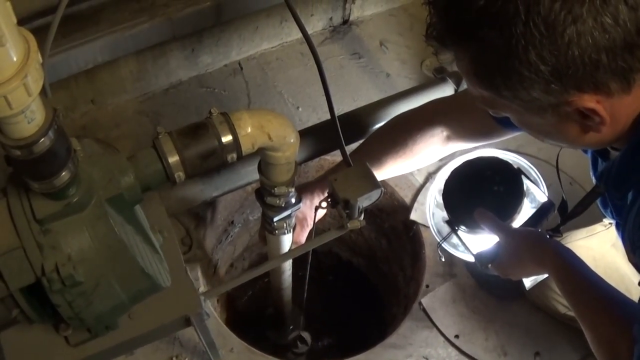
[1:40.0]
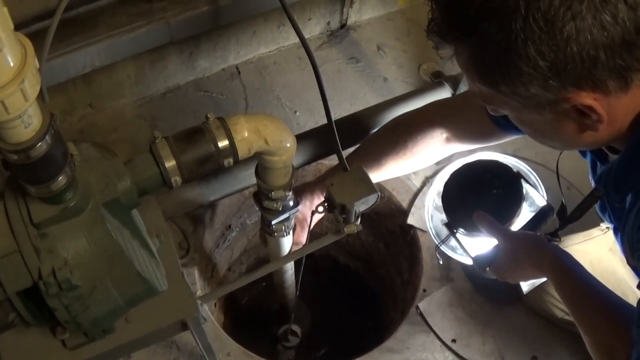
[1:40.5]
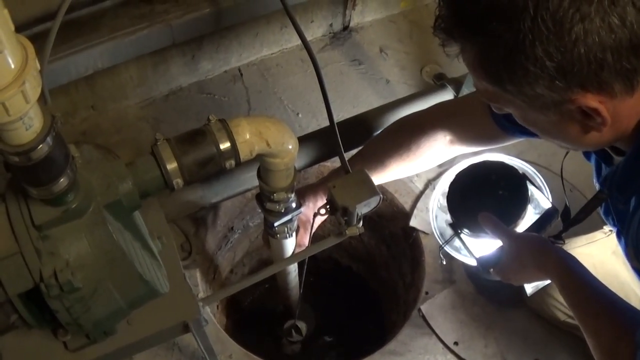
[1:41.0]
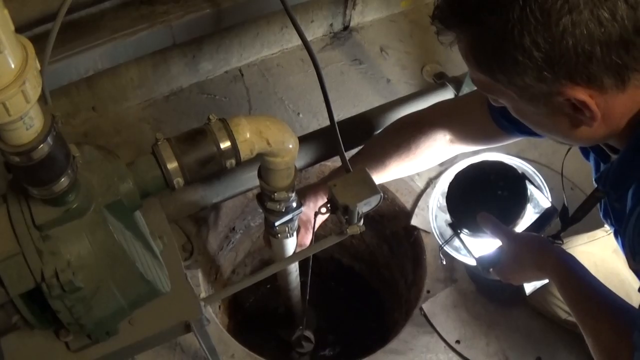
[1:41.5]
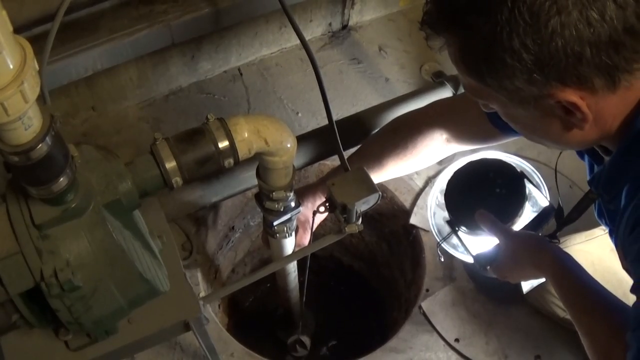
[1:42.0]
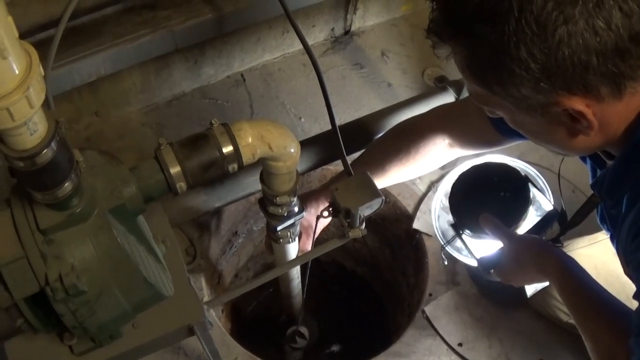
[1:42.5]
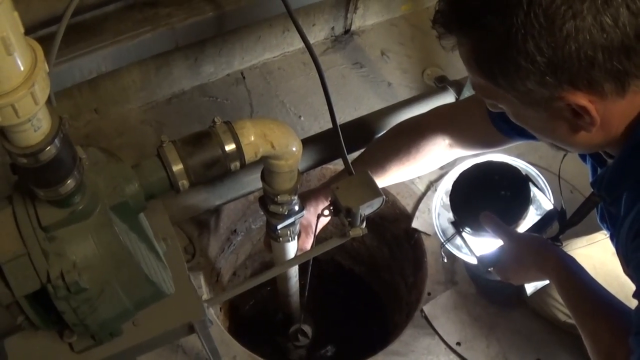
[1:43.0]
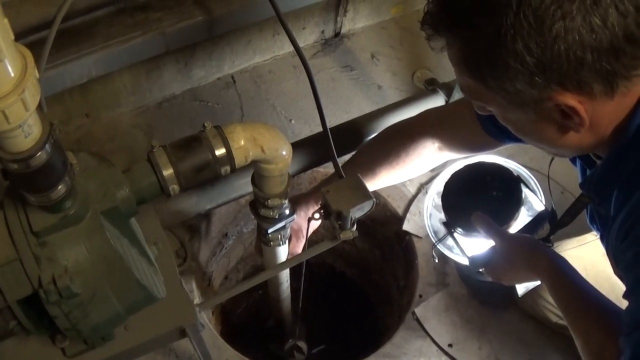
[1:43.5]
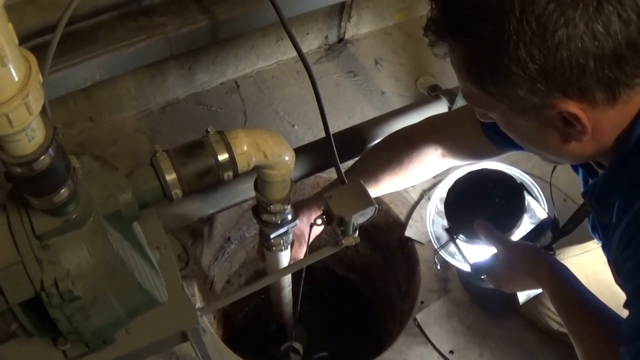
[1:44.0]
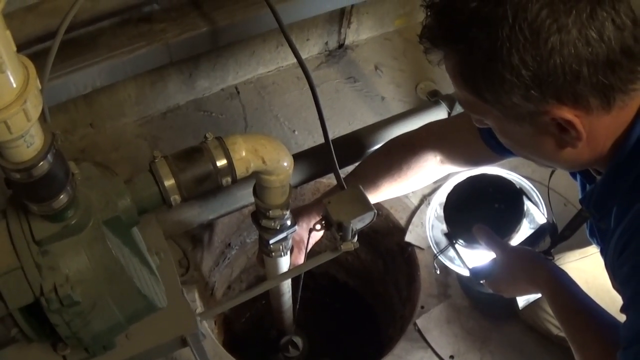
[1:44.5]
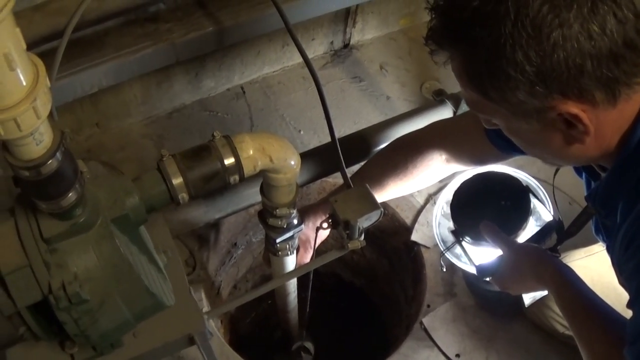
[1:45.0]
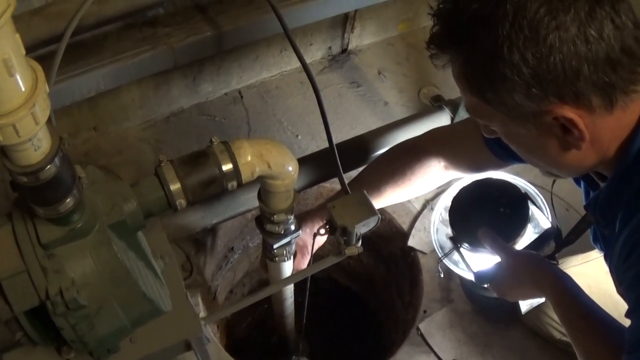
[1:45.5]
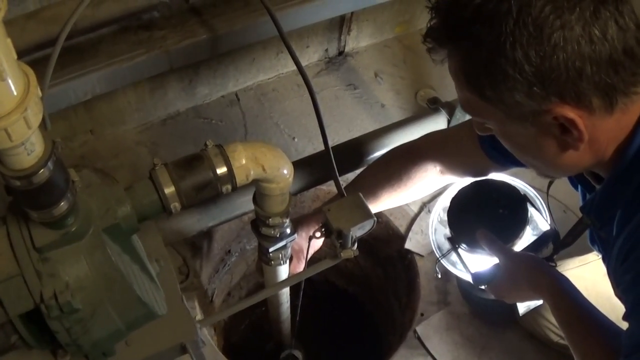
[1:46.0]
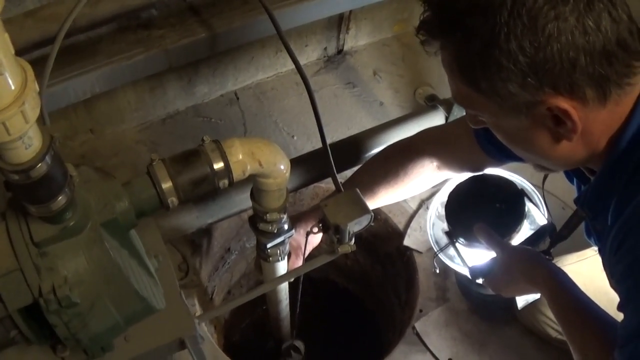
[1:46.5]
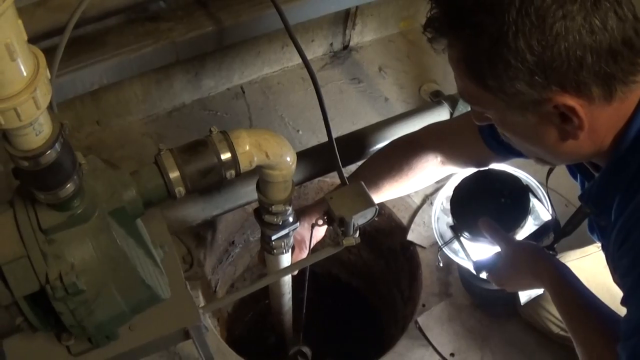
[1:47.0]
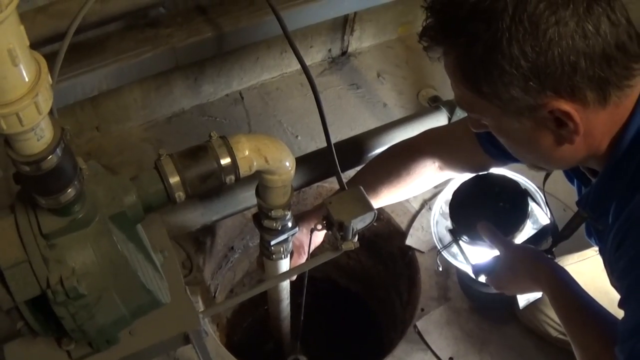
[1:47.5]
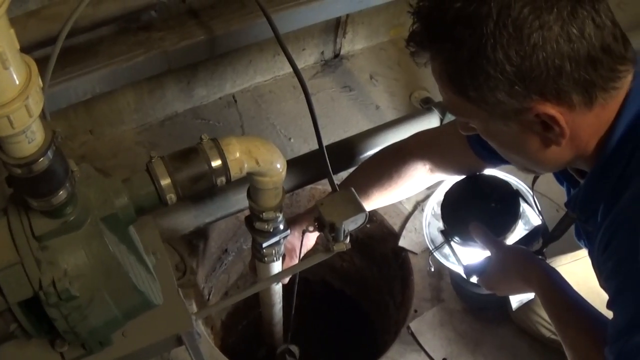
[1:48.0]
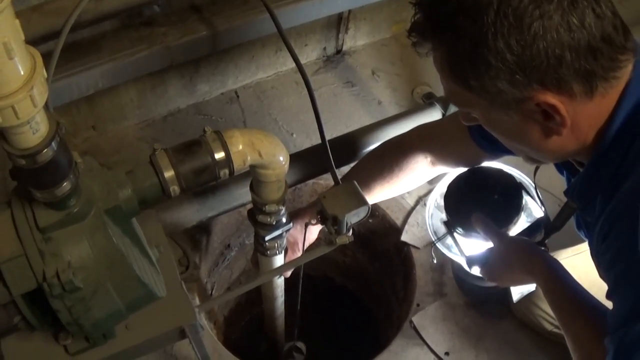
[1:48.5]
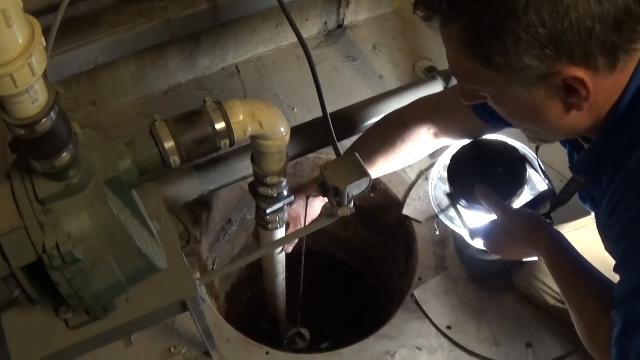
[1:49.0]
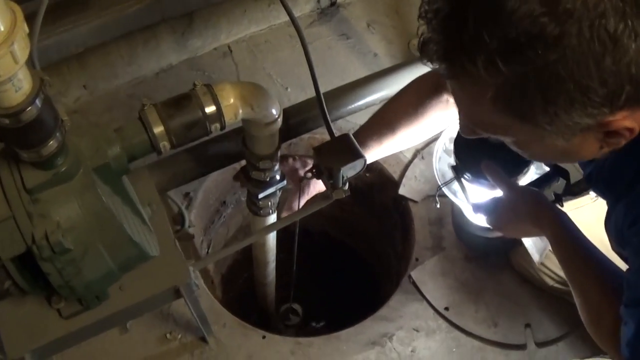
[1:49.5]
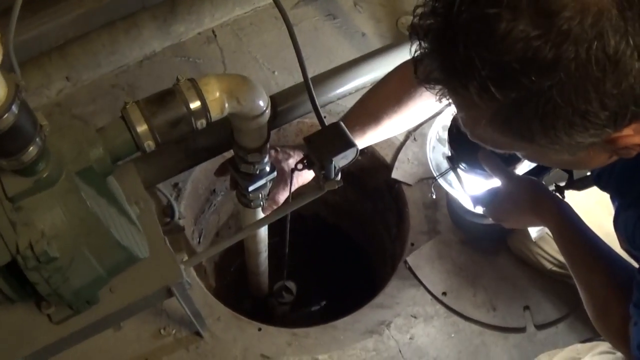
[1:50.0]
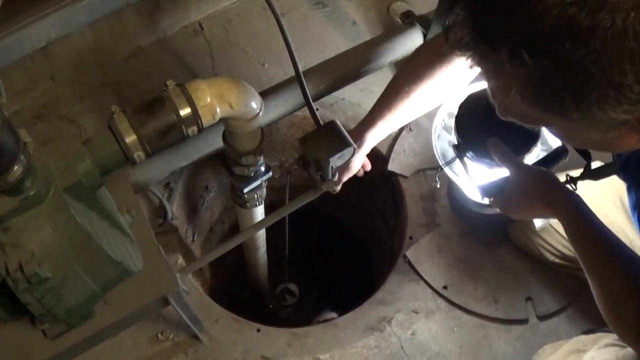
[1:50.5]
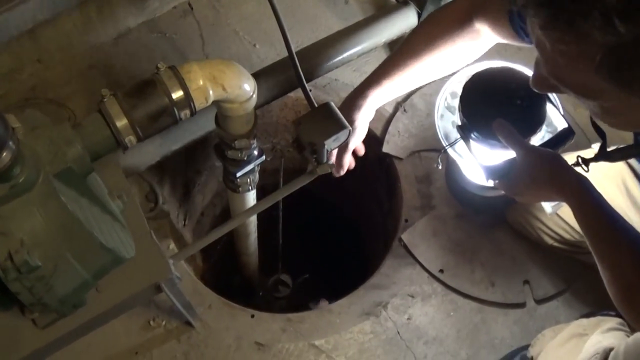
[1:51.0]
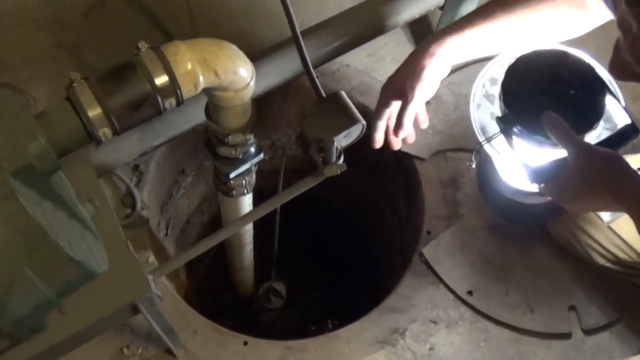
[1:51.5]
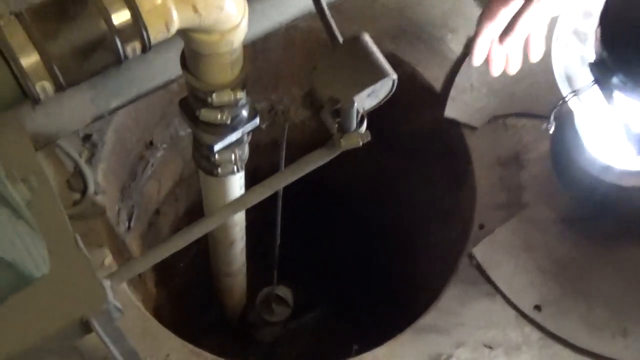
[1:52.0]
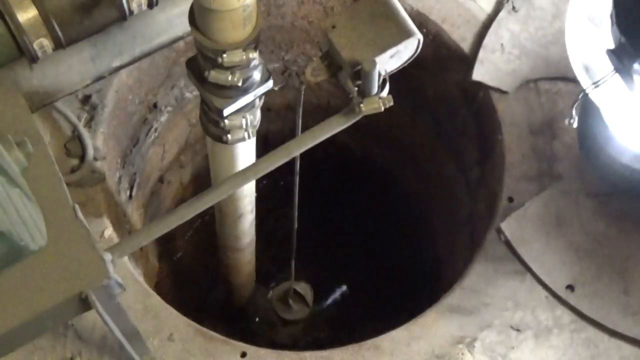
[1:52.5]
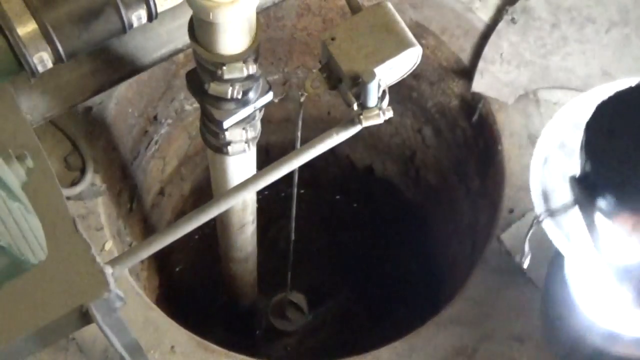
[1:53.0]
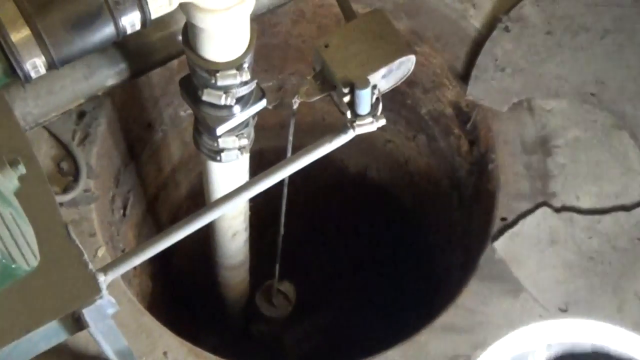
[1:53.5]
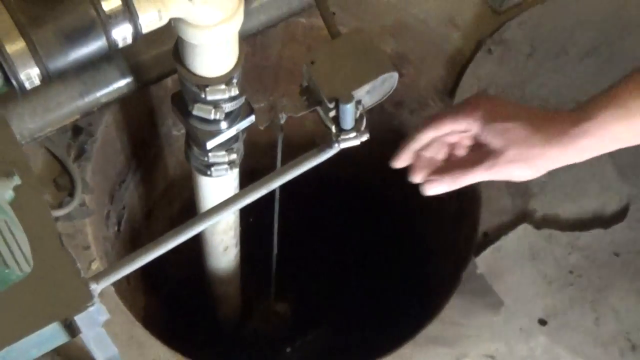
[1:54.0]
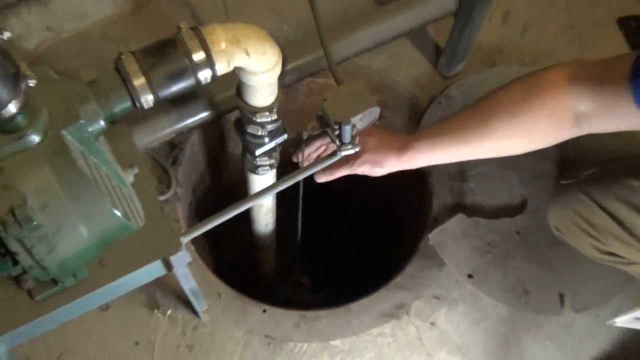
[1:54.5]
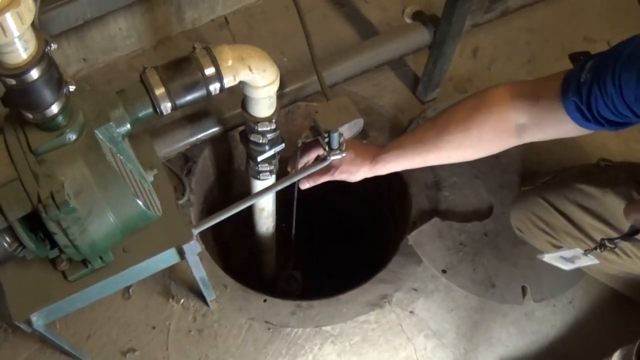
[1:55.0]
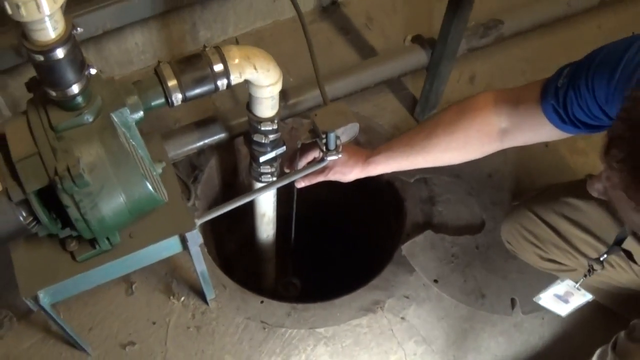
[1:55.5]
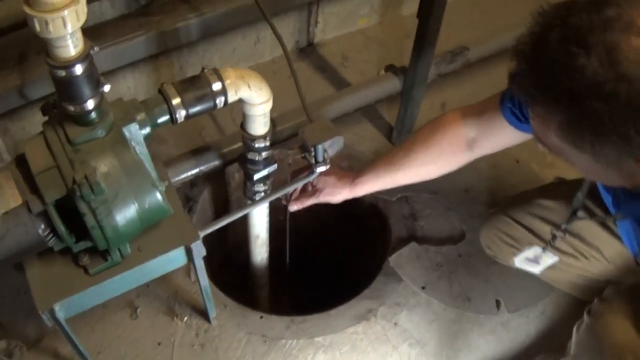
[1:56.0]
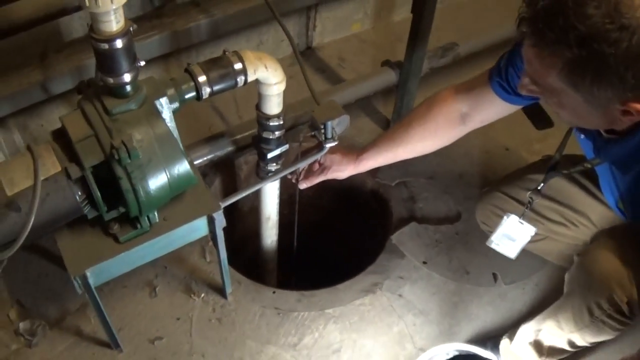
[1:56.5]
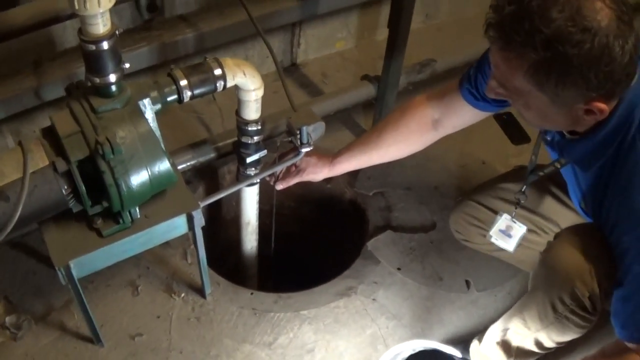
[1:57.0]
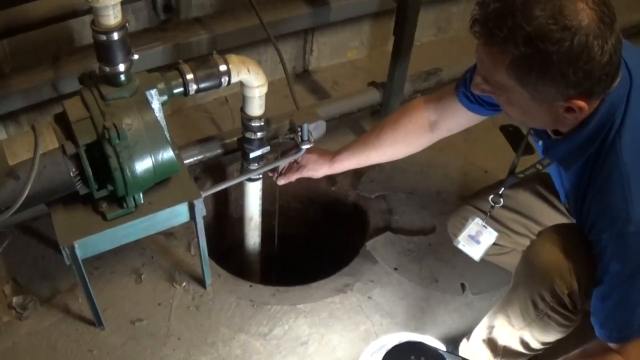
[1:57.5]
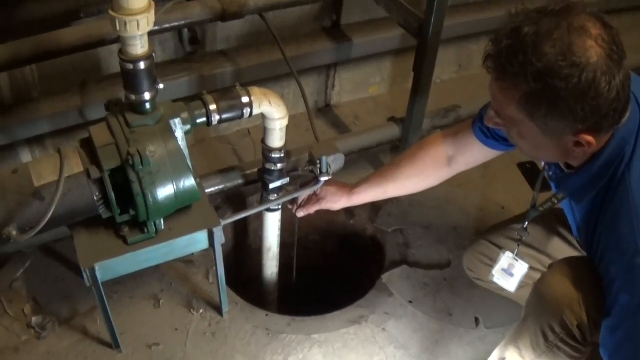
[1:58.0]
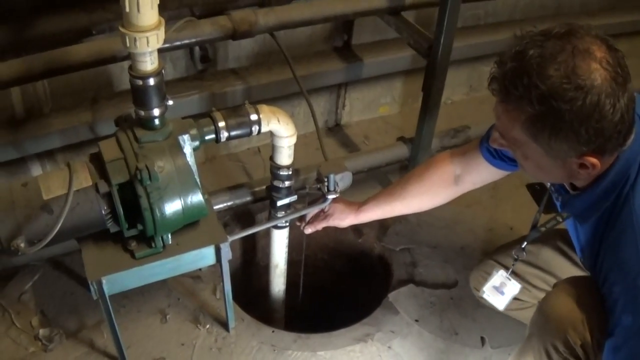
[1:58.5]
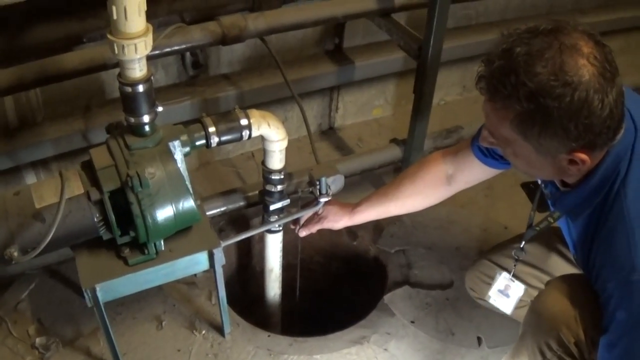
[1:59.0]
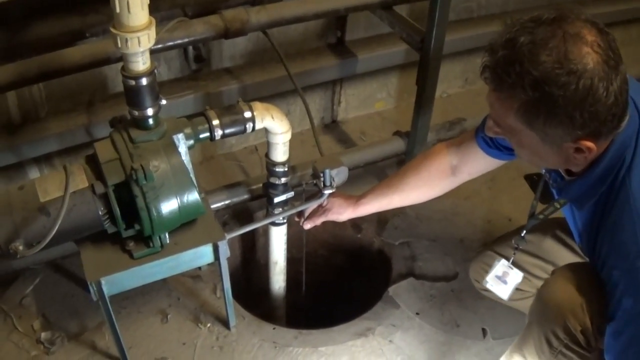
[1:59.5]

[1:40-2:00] The man in the blue t-shirt is shown with the focus on the hole. His left hand carries the lamp while the other hand moves the white pipe coming from the hole. Near the white pipe, a string comes out of the hole, apparently carrying something like a plumb bob. The hole is cylindrical, and the man looks at it while talking as the cameraman zooms. Liquid is visible from its reflection, and the man holds the plumb bob-like thing. His right knee is still on the floor as he keeps explaining. Zoomed in, the connectors look creamy. The liquid is not far down but close enough that a hand placed in the hole could touch it.